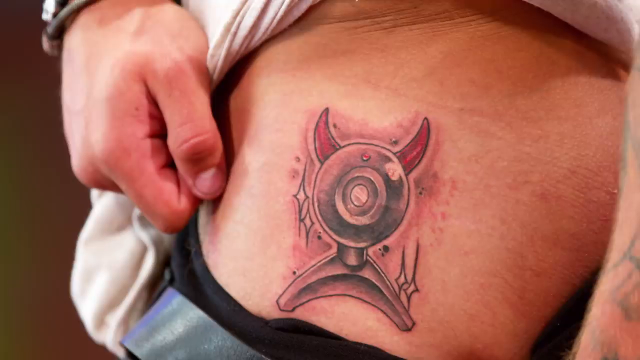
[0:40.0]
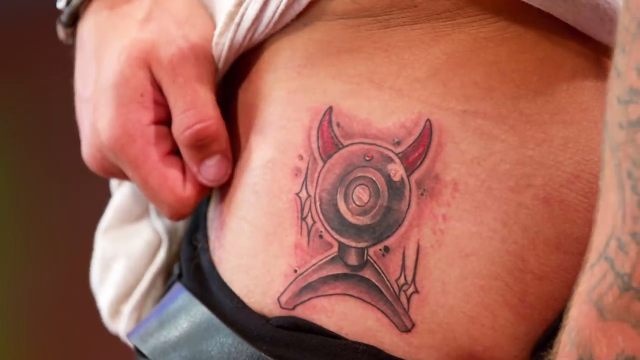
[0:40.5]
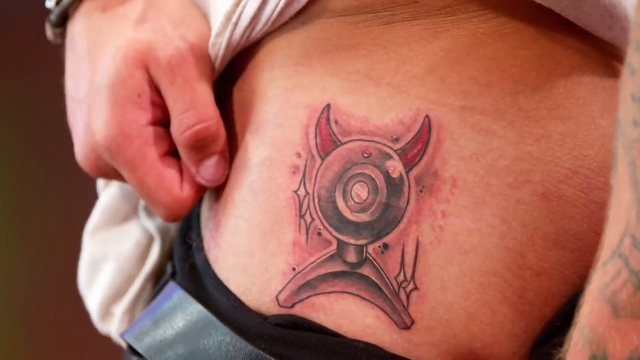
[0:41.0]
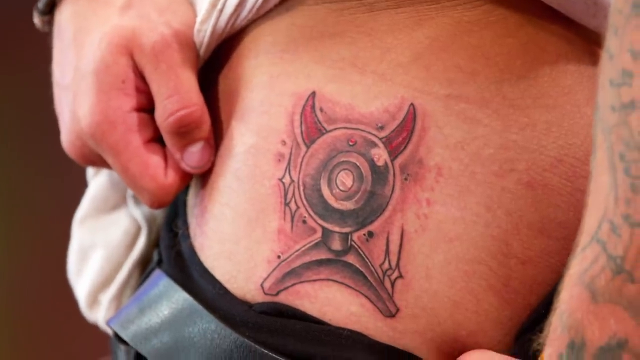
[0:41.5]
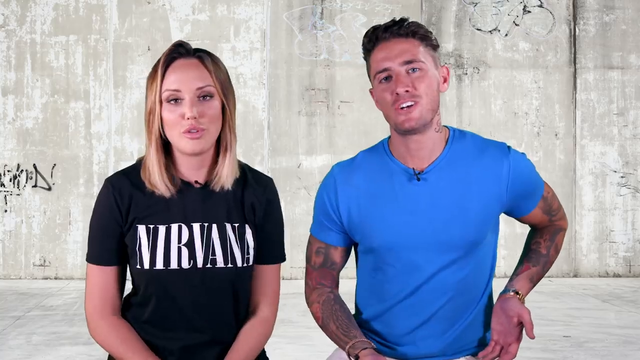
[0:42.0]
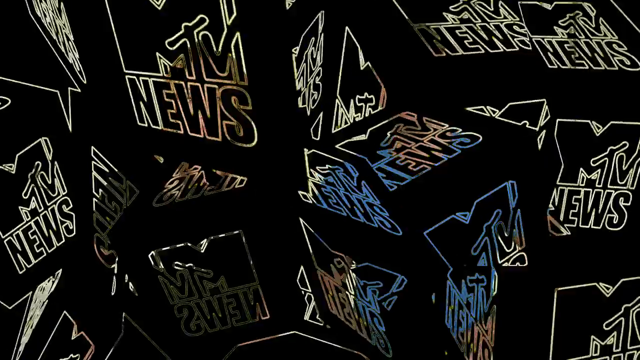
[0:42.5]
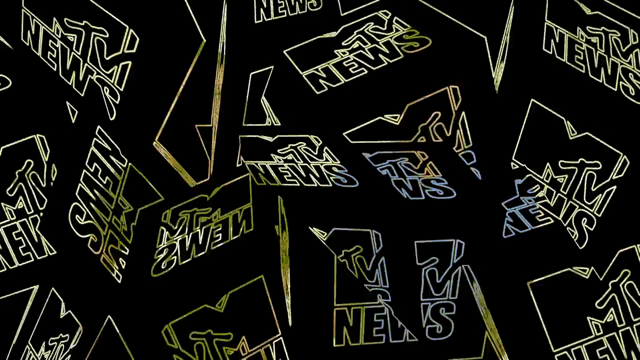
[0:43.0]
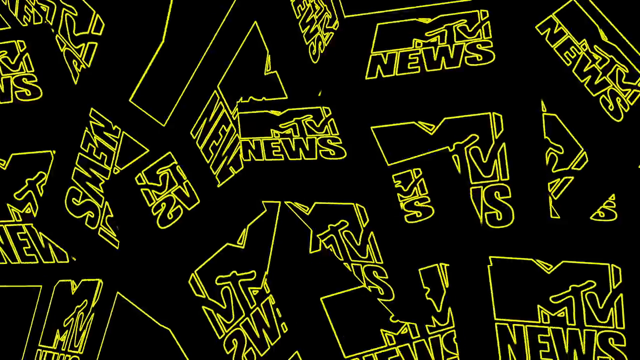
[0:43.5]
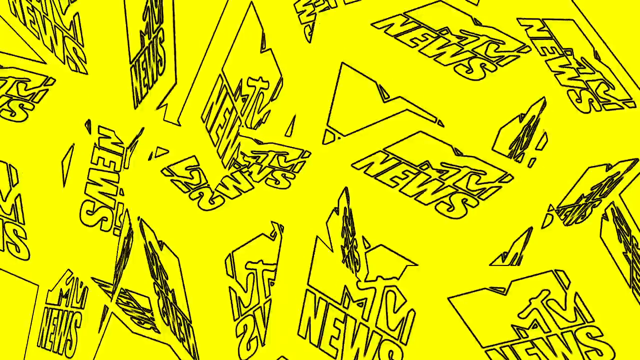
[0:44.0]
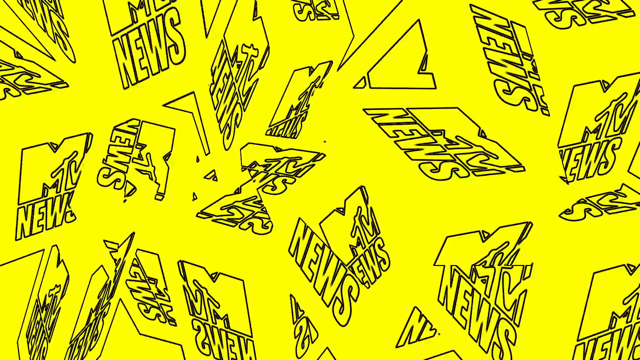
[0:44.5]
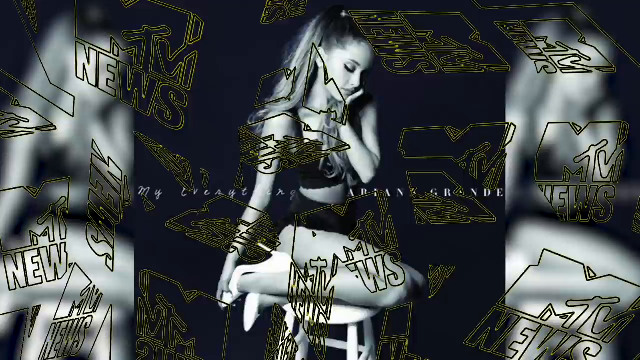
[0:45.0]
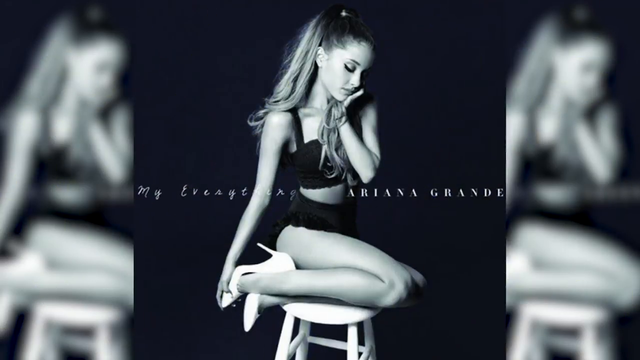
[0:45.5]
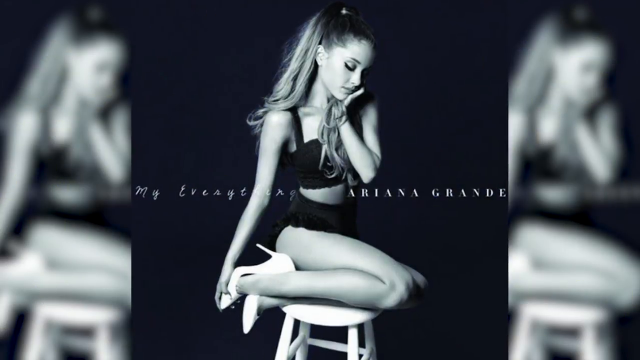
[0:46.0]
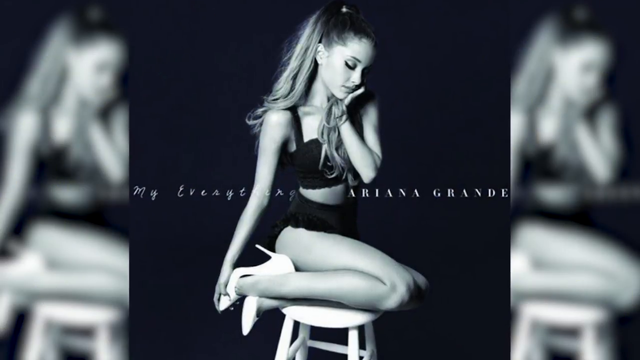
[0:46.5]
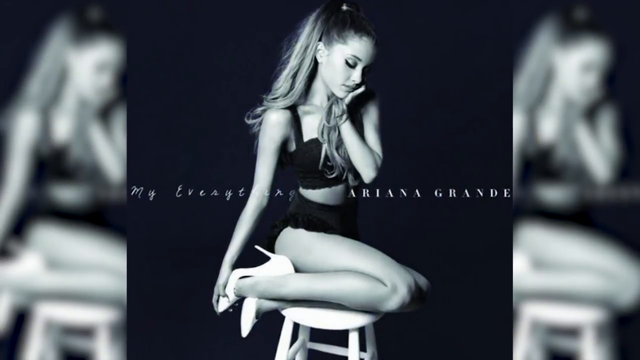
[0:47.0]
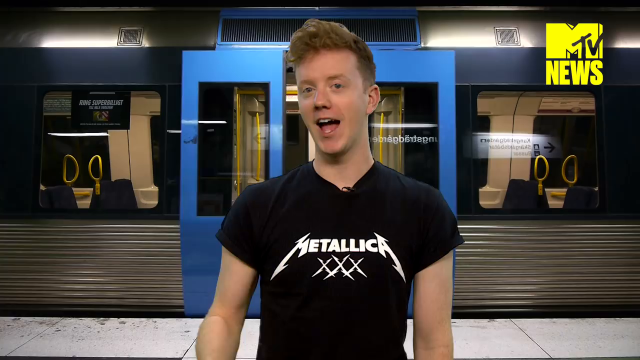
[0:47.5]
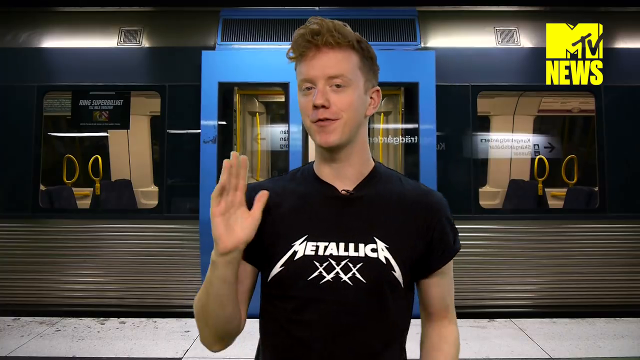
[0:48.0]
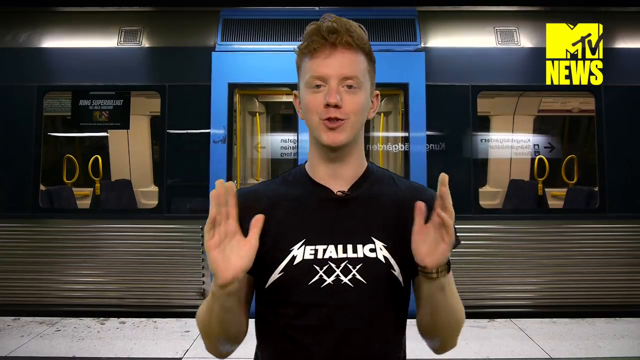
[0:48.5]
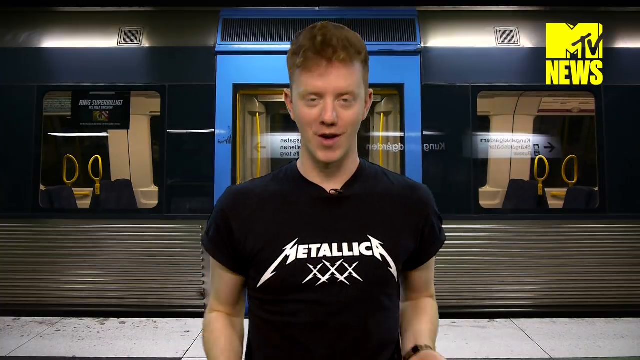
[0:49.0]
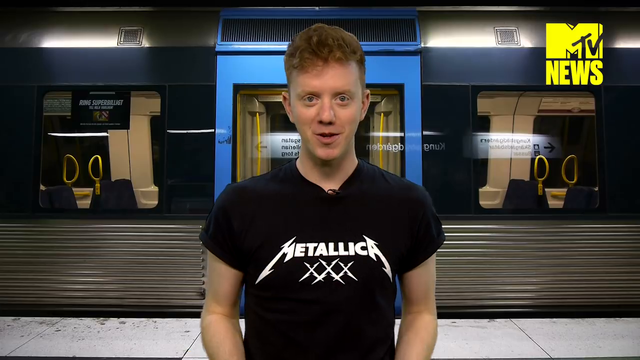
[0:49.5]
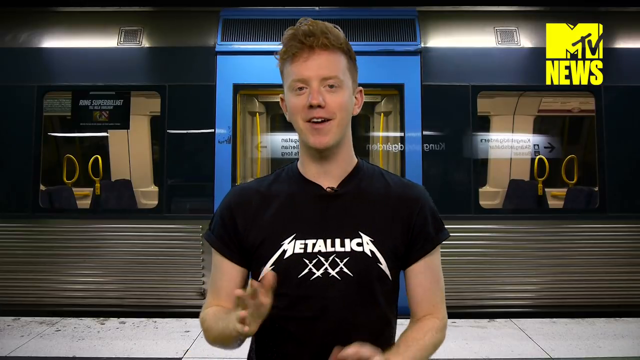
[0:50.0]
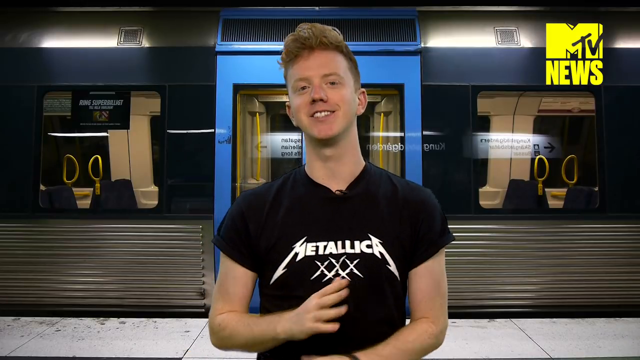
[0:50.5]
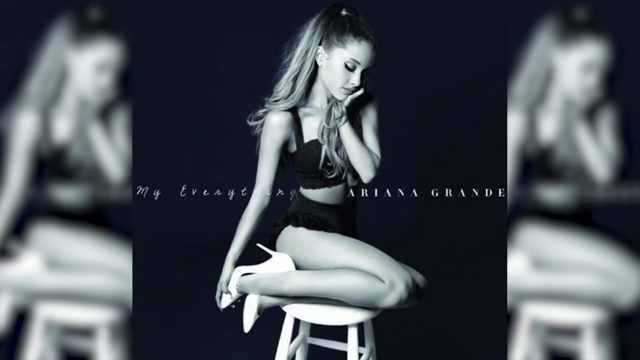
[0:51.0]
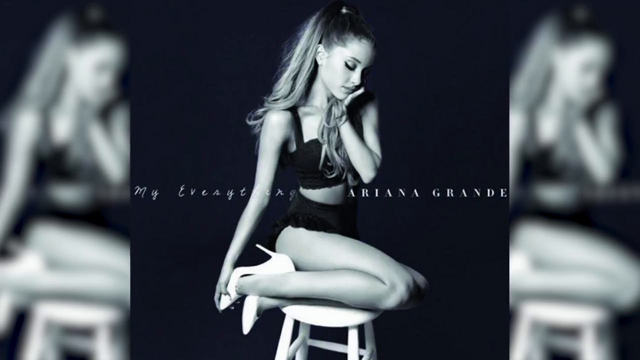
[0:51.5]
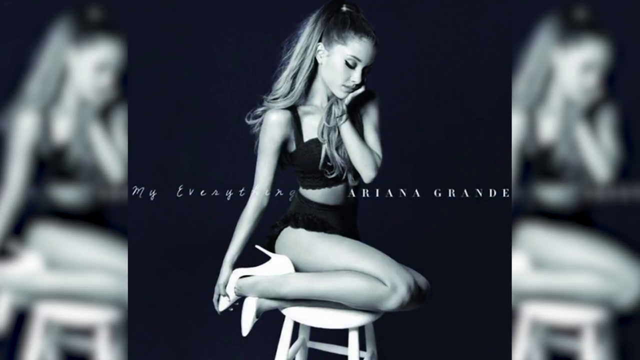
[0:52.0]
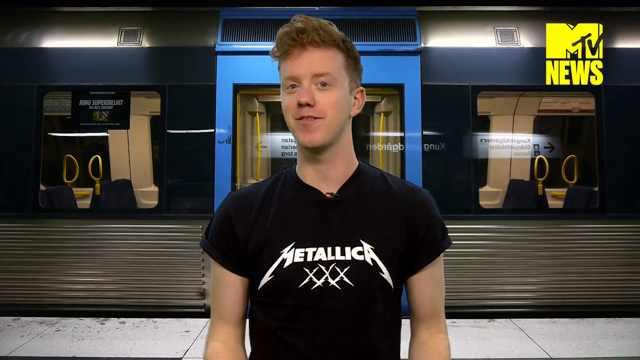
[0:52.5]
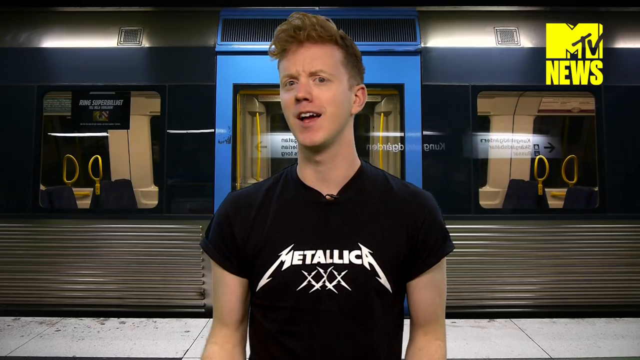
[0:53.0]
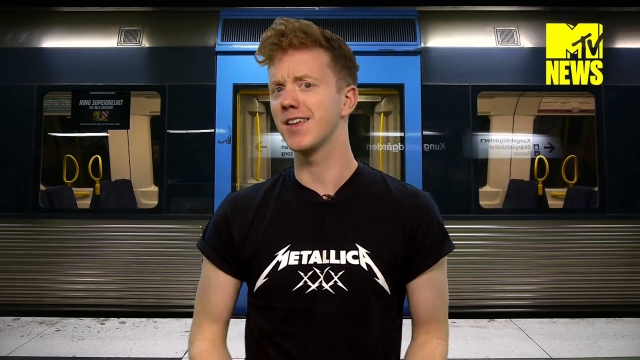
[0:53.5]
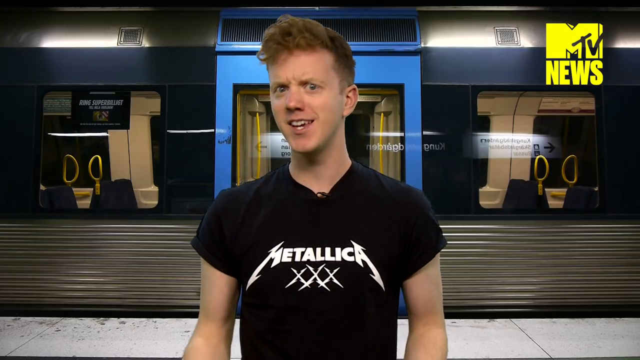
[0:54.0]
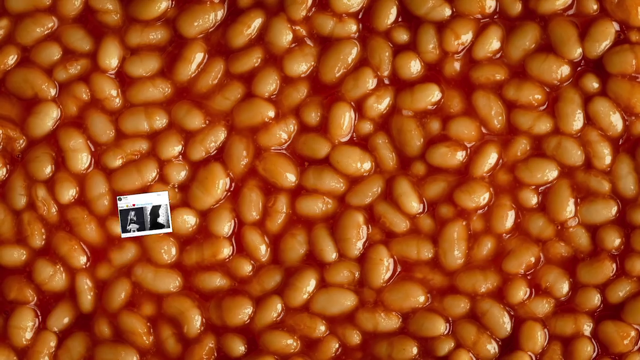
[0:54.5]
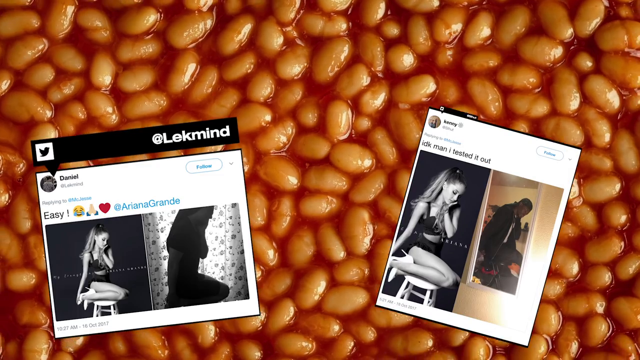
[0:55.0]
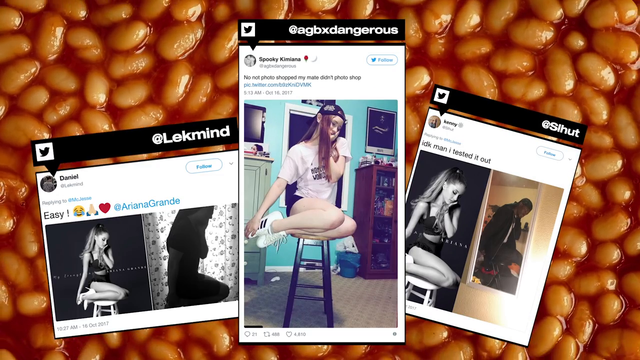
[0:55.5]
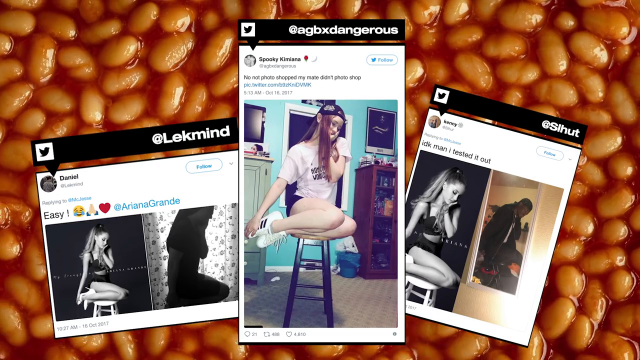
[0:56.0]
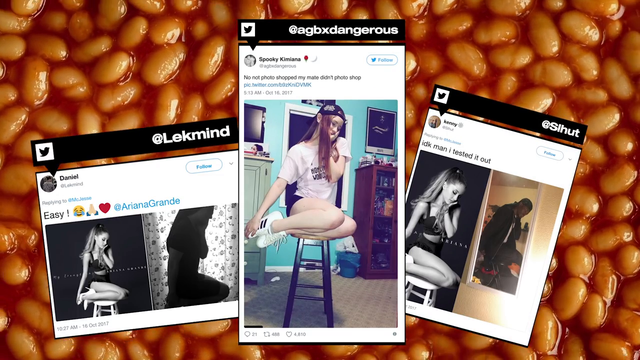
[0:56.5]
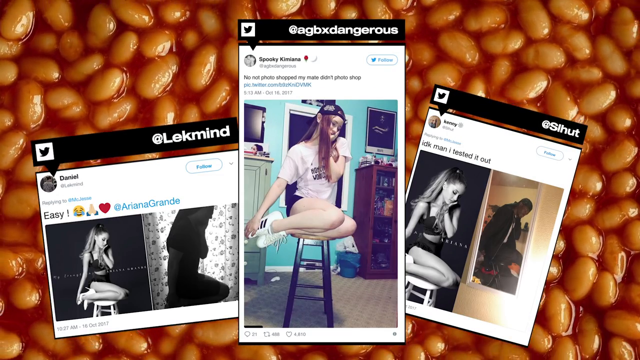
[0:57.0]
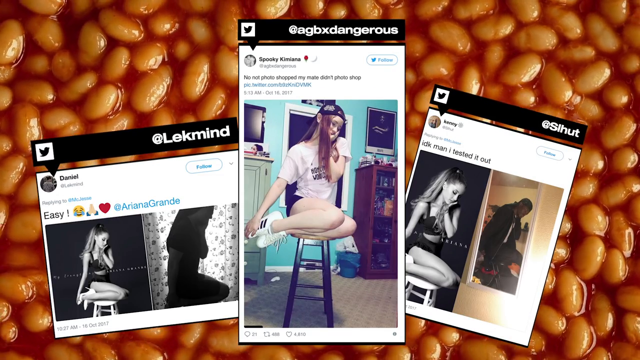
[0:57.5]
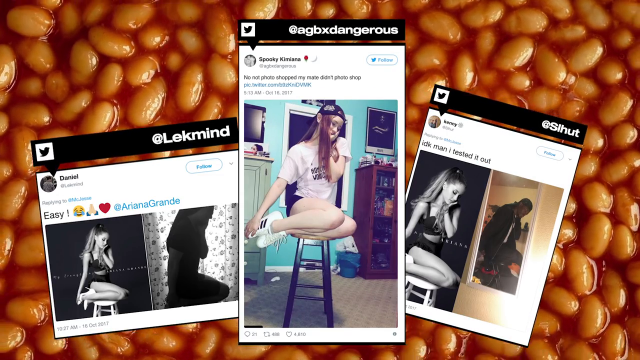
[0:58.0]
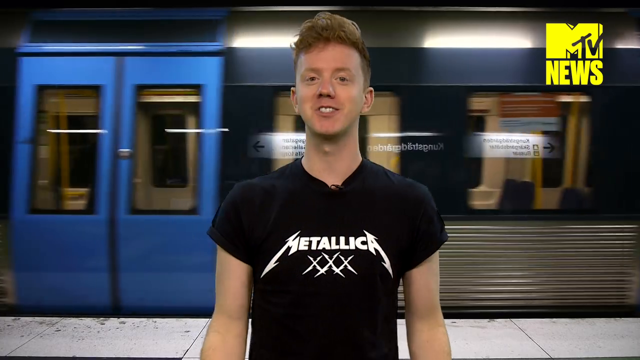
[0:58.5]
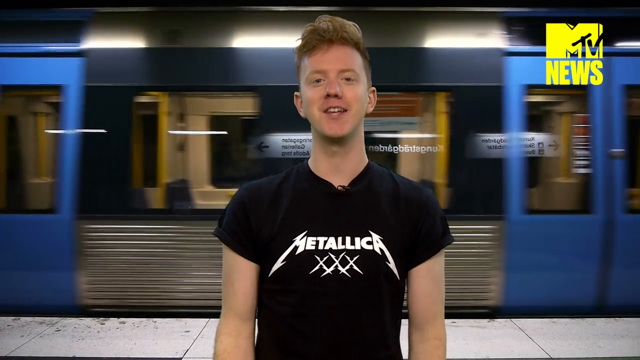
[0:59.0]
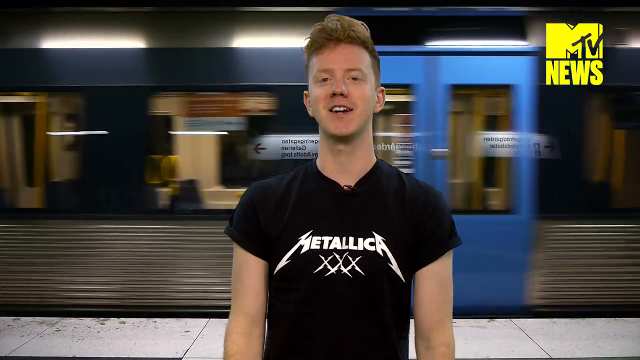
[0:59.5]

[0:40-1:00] The tattoo that seems to be almost a webcam with devil horns appears, then the video returns to the man in the blue shirt and the woman, who wears a black shirt with white Nirvana text. The woman is to the left of the man, who has sleeve tattoos and brown hair; she has kind of dirty brown hair, and both are around 20 to 30. The video cuts to a screen showing Ariana Grande in white heels kneeling on a white stool with both legs on the stool. It returns to the original man in the black shirt with white metallic text and three X's, with a kind of train background behind him, then goes back to Ariana Grande, shown in black and white with white text and a kind of navy blue background behind her.